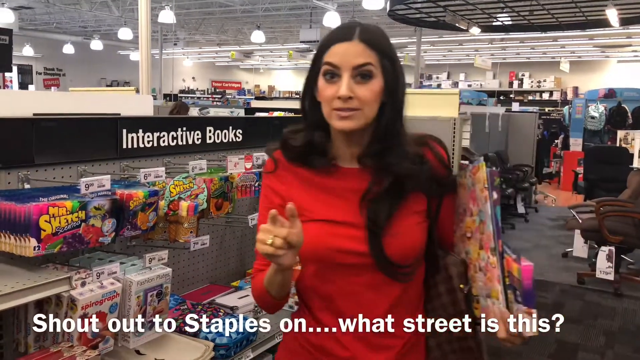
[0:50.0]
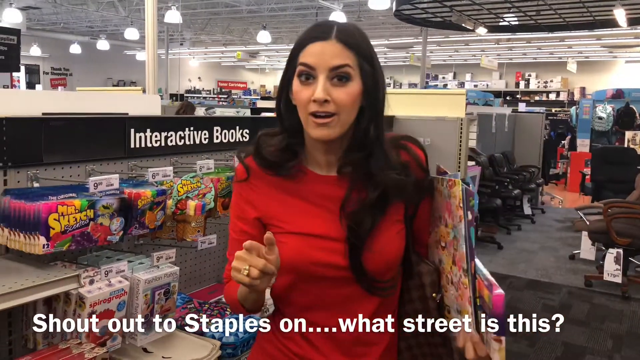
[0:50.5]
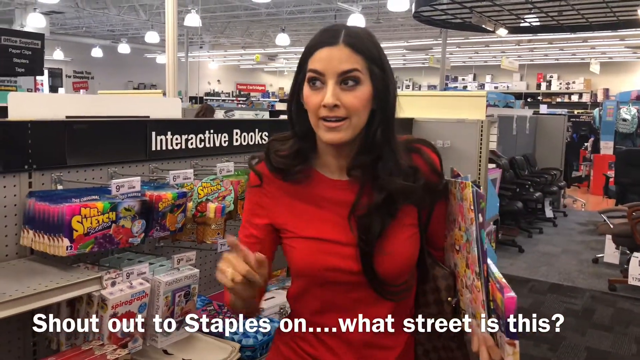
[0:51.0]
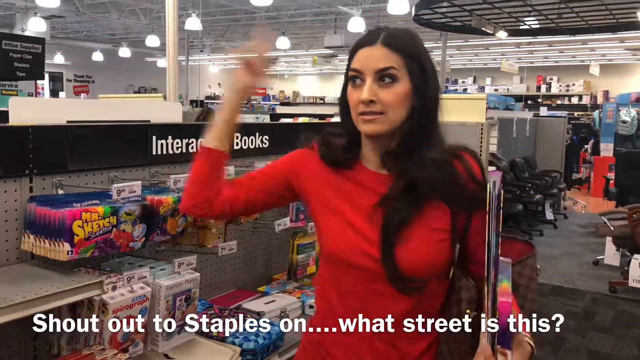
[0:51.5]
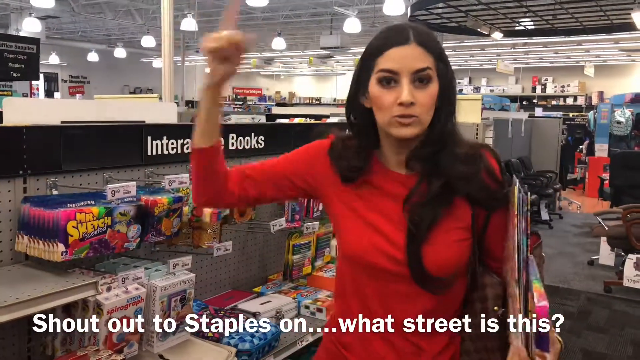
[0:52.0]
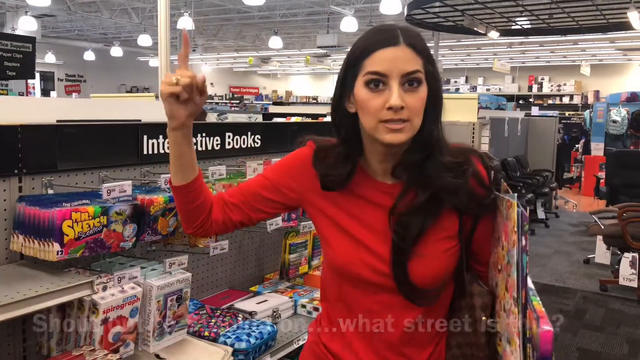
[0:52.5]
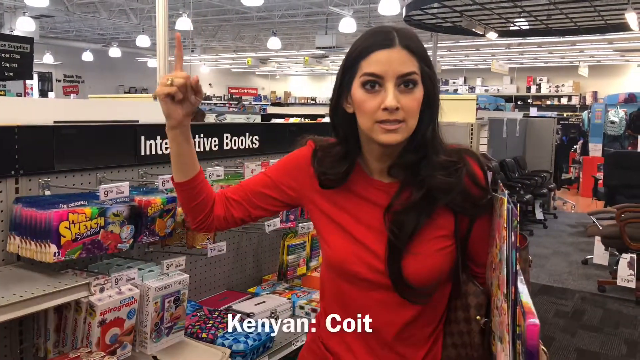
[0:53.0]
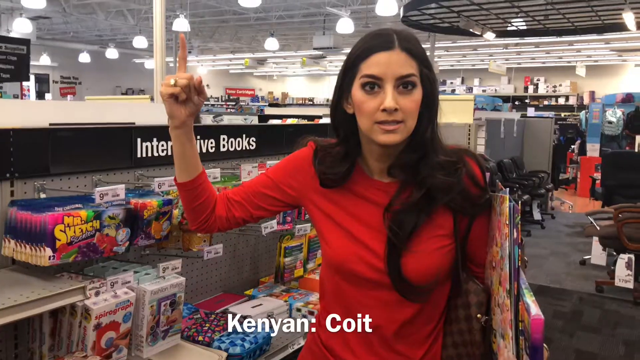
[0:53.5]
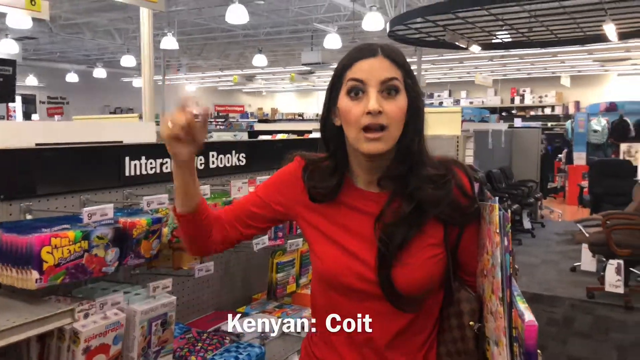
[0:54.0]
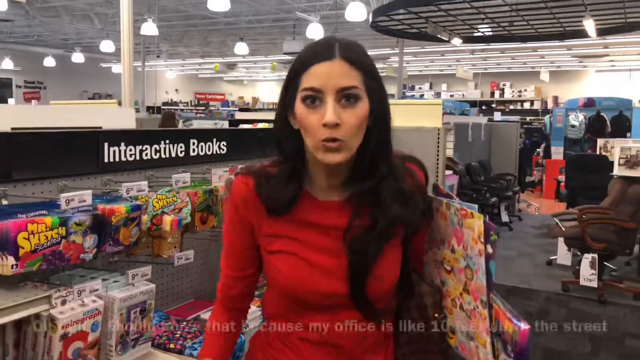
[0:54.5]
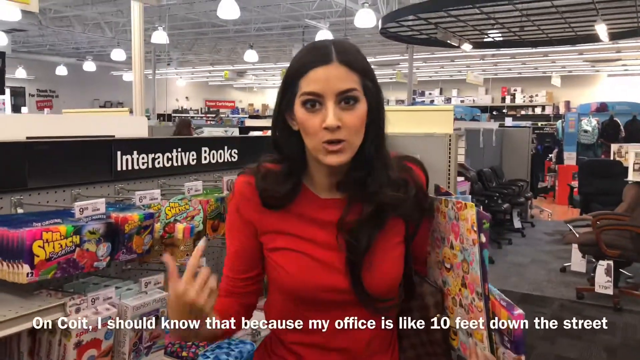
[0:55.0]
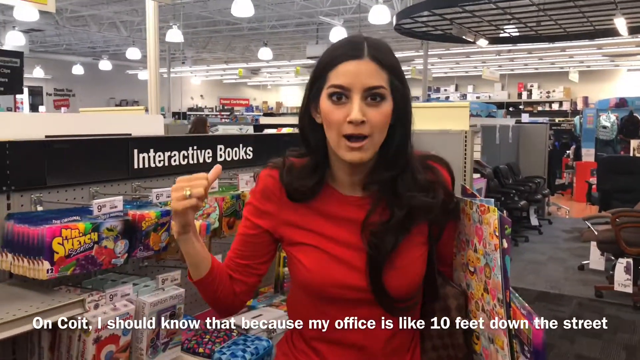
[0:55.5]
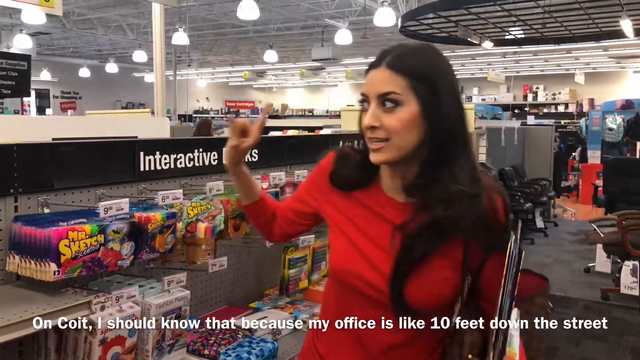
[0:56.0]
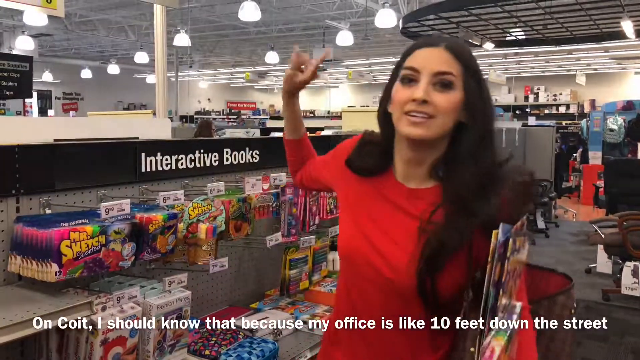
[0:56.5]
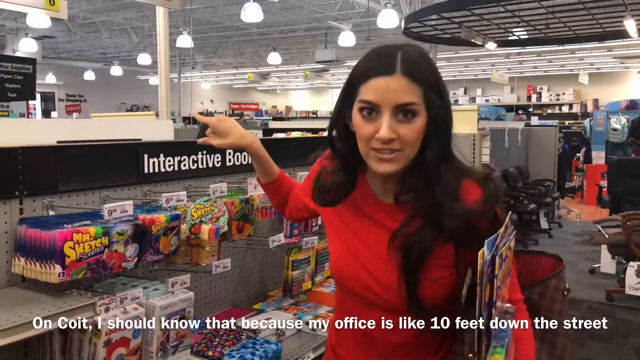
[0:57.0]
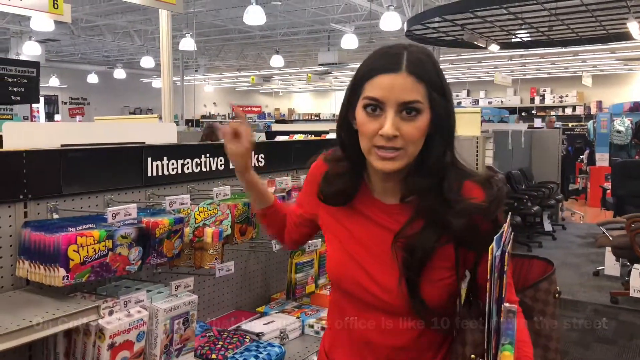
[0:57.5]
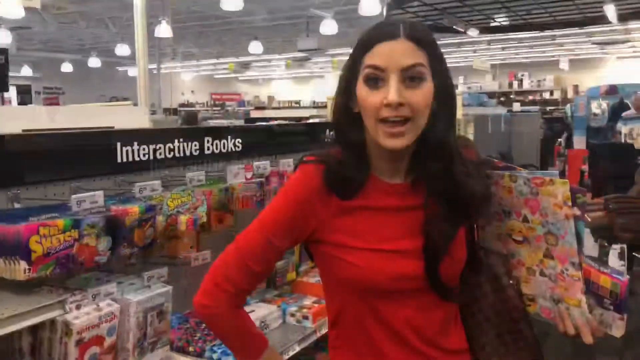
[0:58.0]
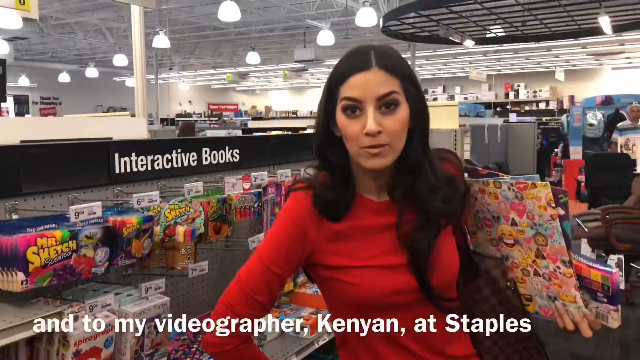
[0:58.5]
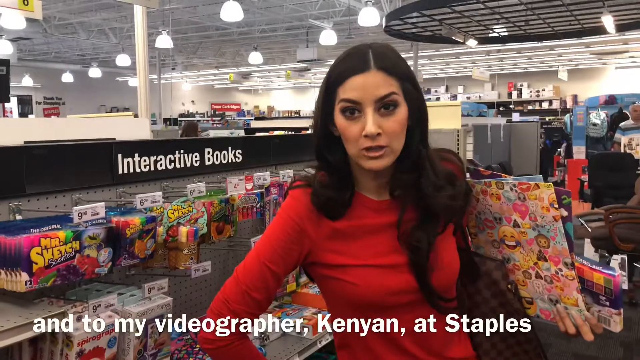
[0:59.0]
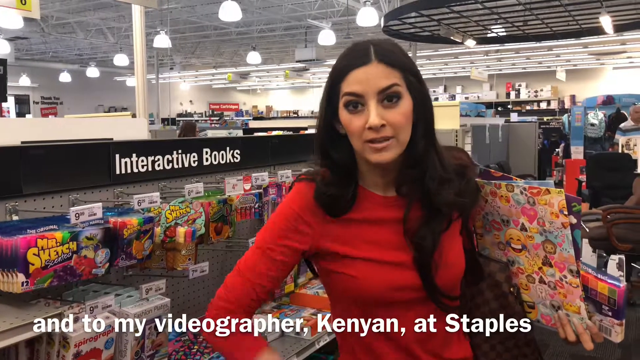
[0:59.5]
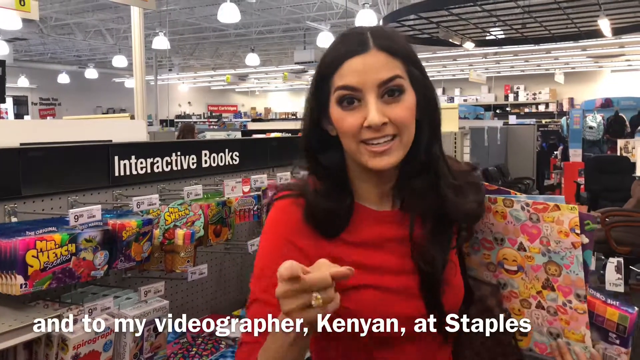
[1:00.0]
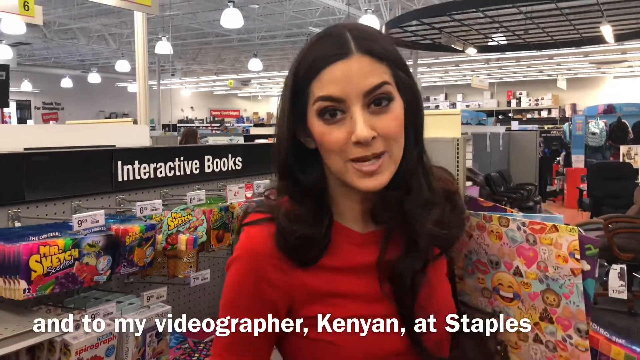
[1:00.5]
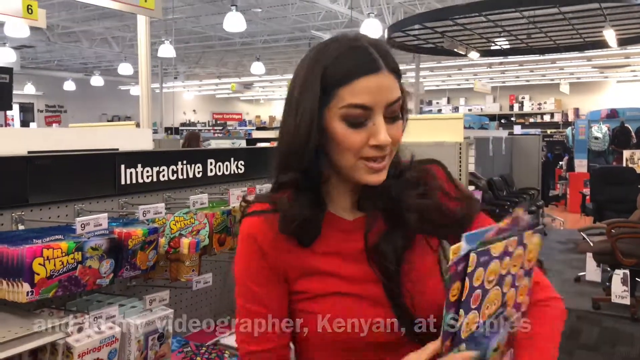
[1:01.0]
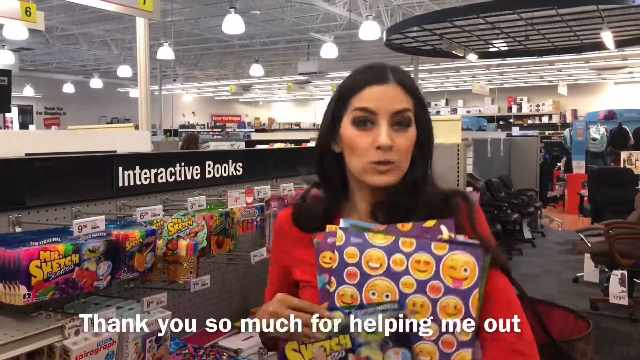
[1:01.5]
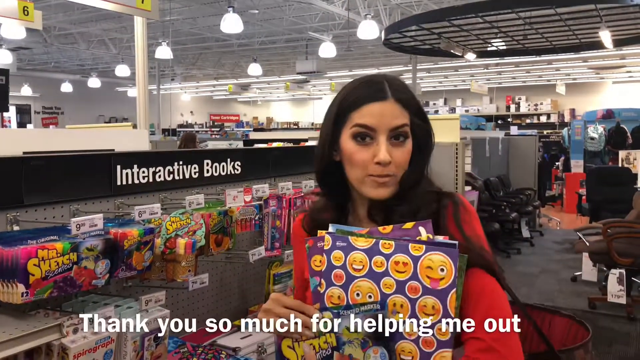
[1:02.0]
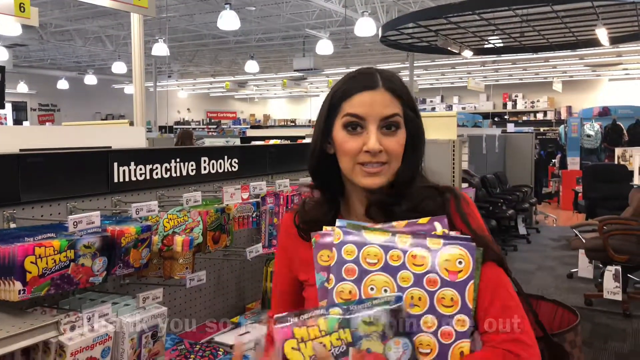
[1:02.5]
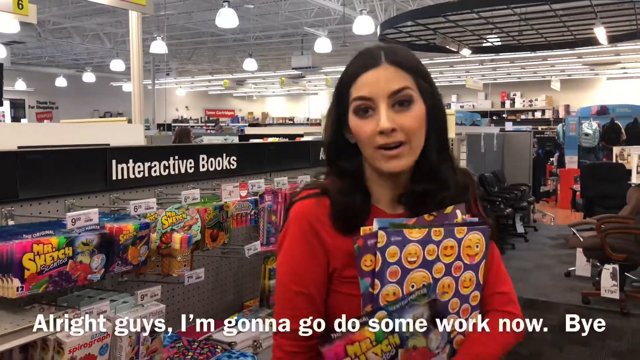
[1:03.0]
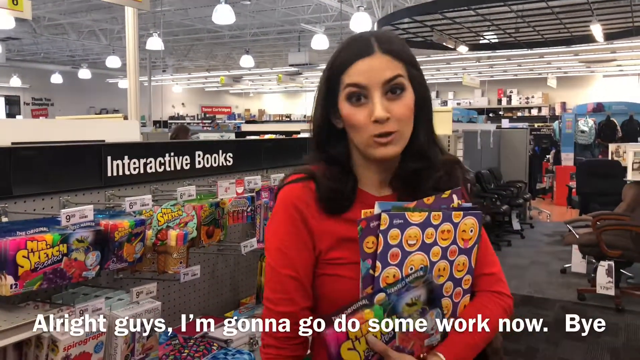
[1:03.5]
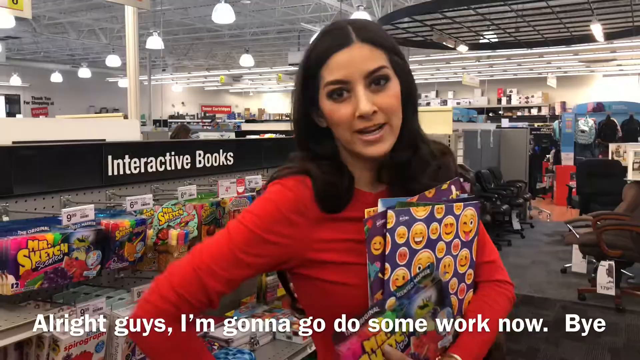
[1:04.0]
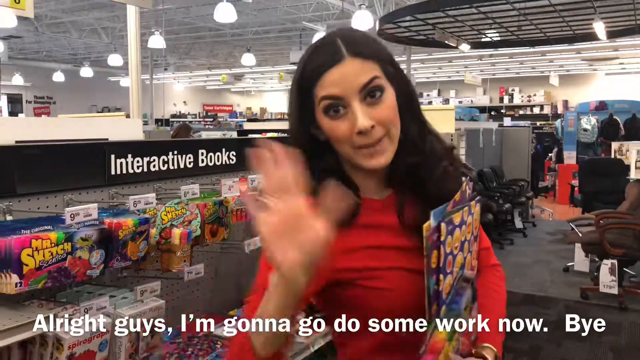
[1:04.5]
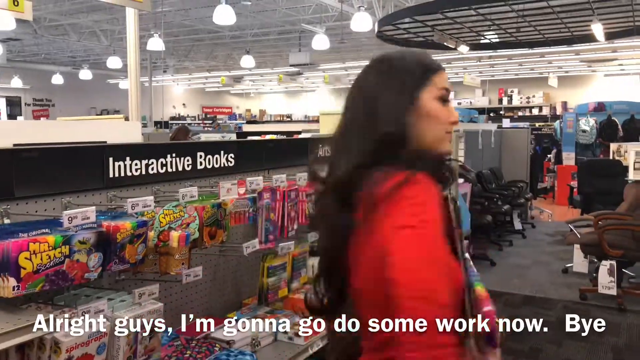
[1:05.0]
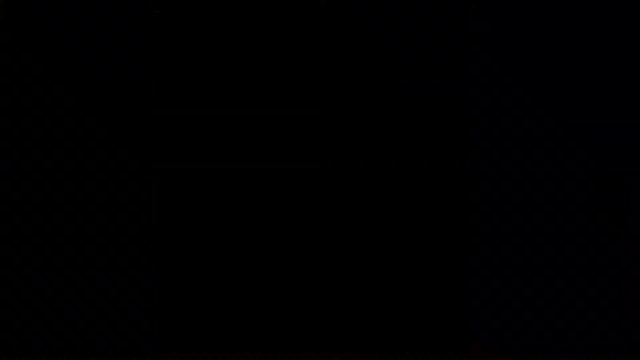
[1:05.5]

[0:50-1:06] The woman in the red shirt is still talking in front of the display that says "interactive books." She talks about her office and her videographer, then says, "Thank you. I've got to go back to work now. Goodbye." Many other shelves are visible in the background, though their products cannot be made out in much detail. The video fades to black.